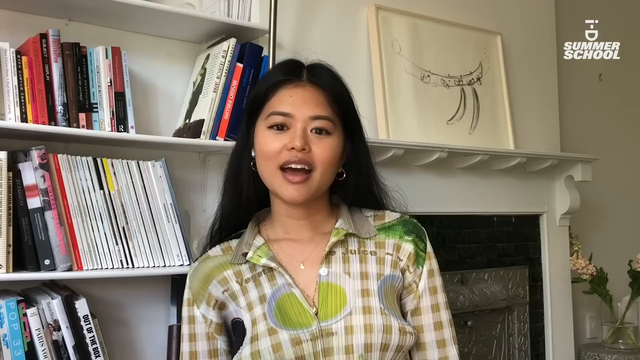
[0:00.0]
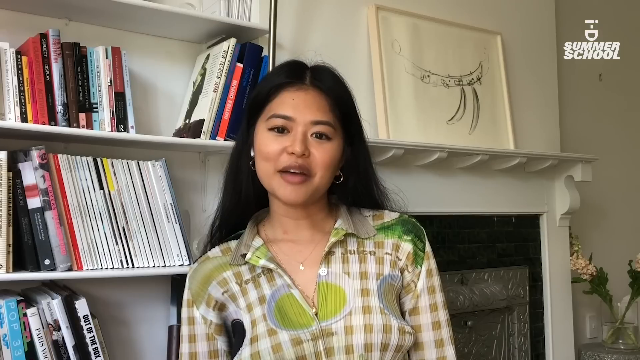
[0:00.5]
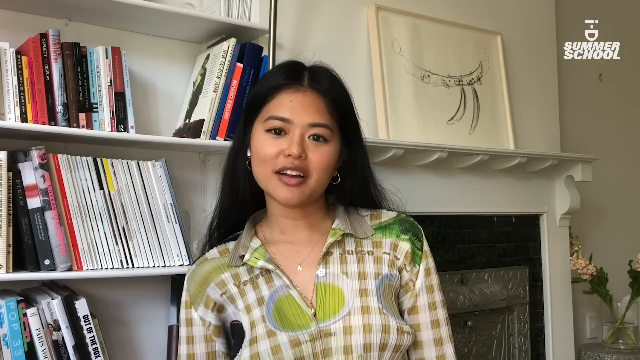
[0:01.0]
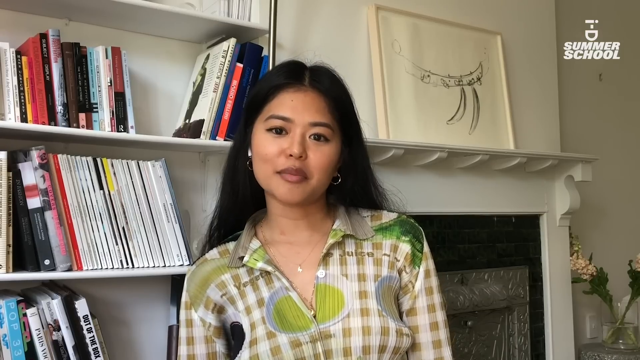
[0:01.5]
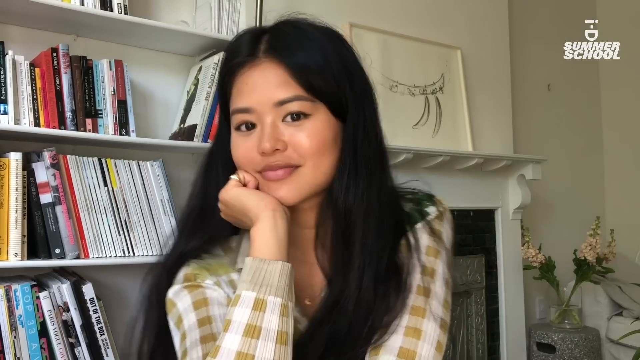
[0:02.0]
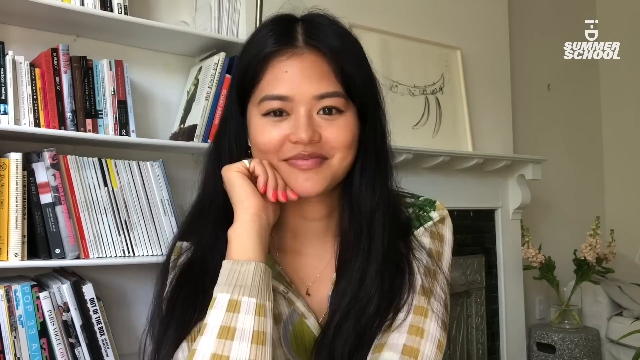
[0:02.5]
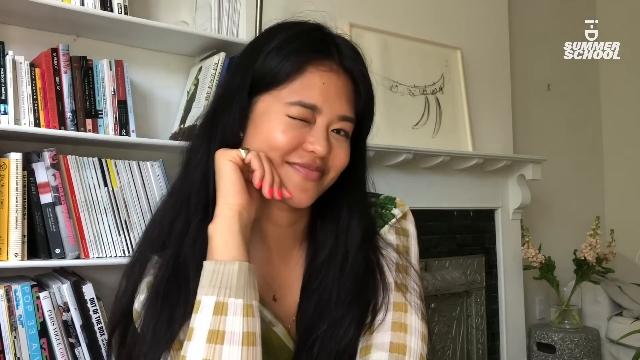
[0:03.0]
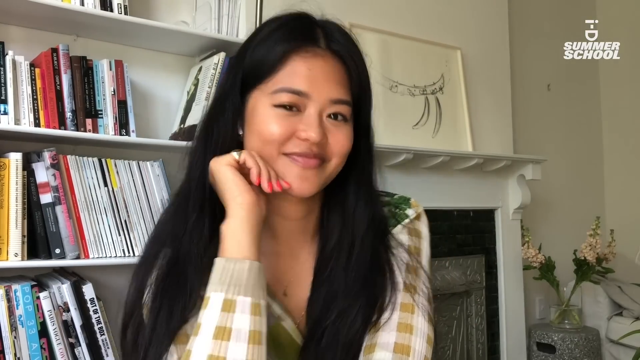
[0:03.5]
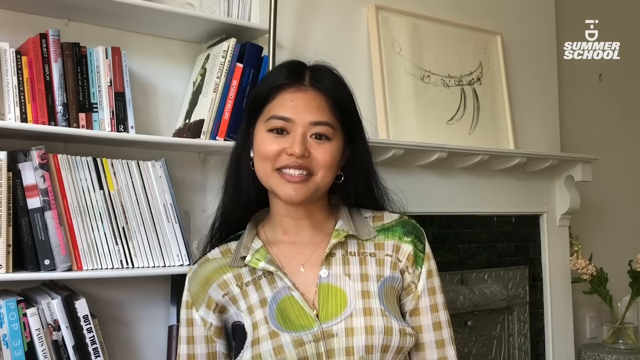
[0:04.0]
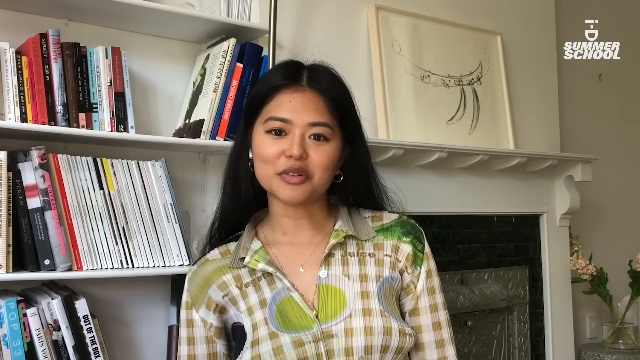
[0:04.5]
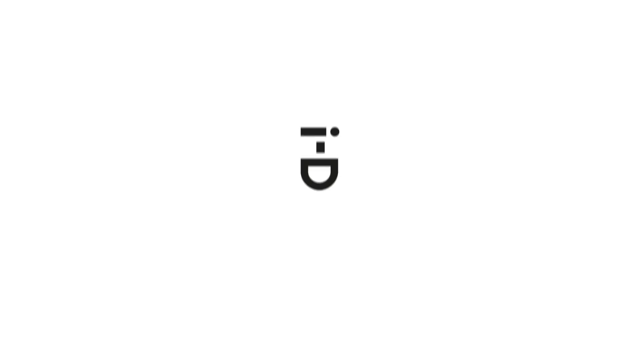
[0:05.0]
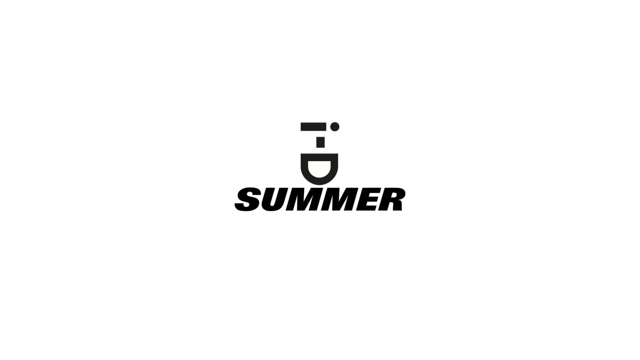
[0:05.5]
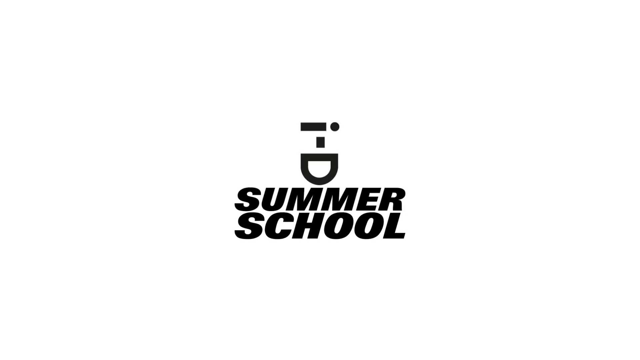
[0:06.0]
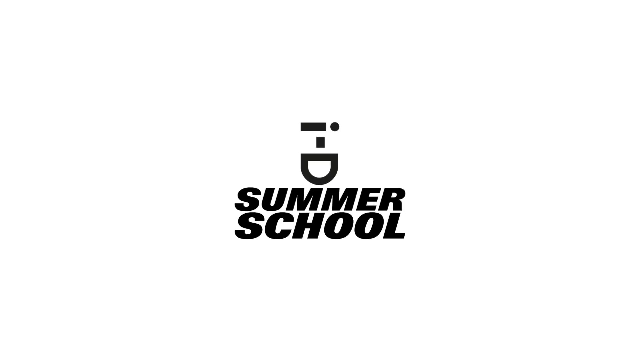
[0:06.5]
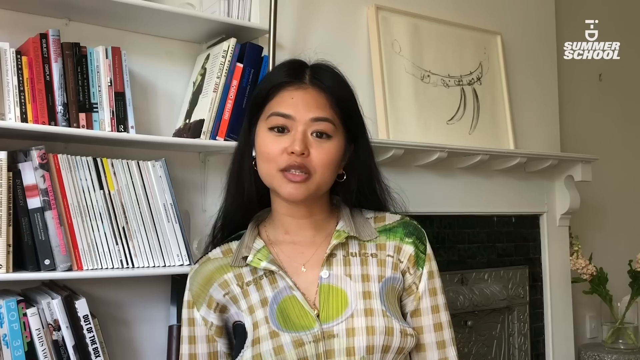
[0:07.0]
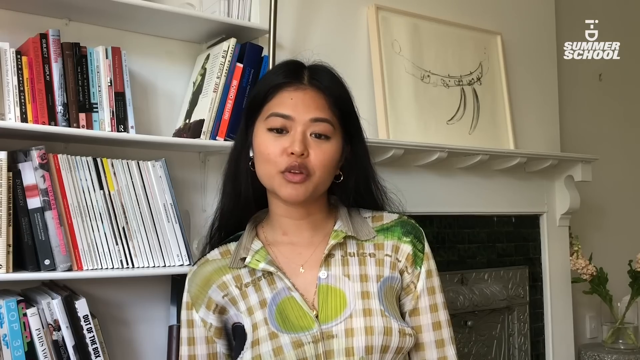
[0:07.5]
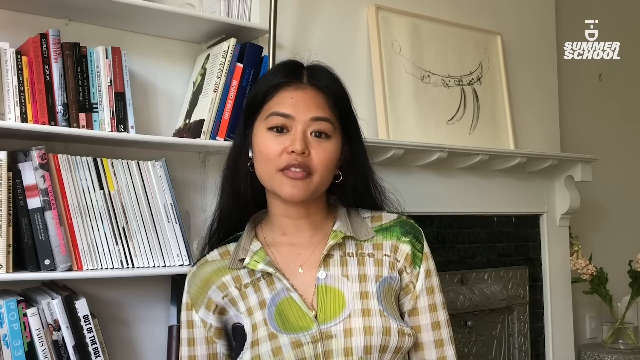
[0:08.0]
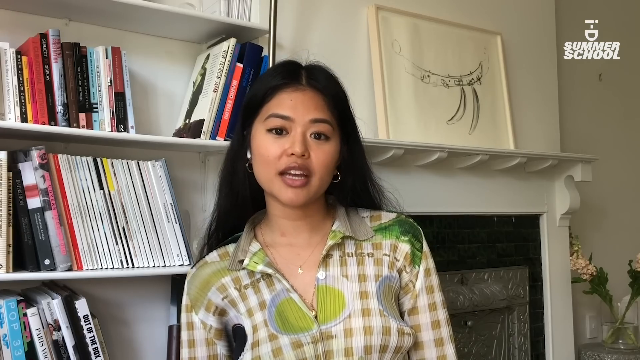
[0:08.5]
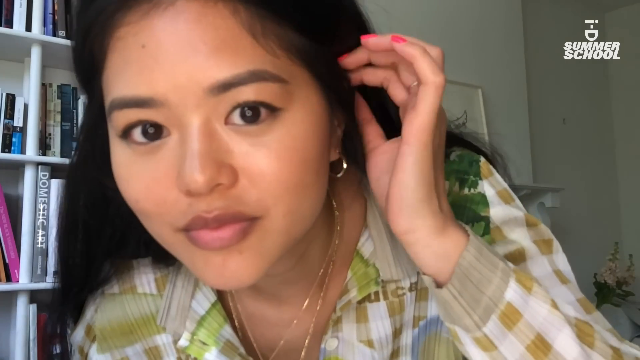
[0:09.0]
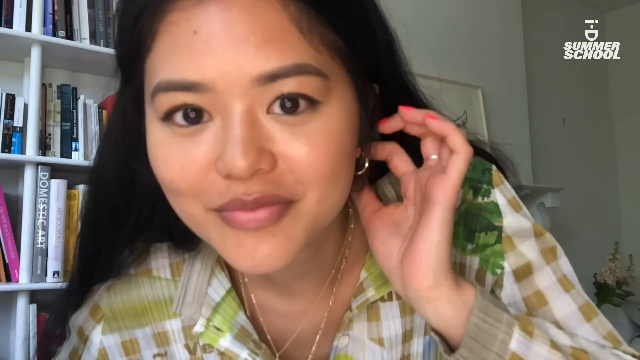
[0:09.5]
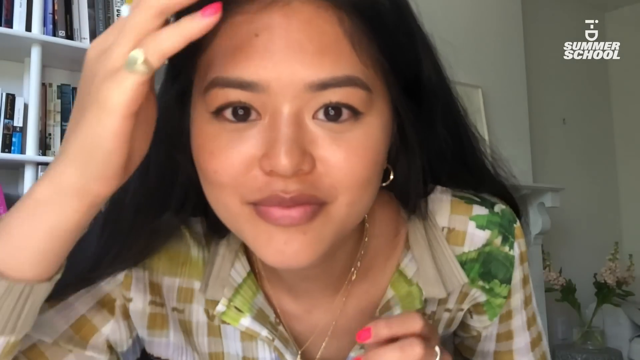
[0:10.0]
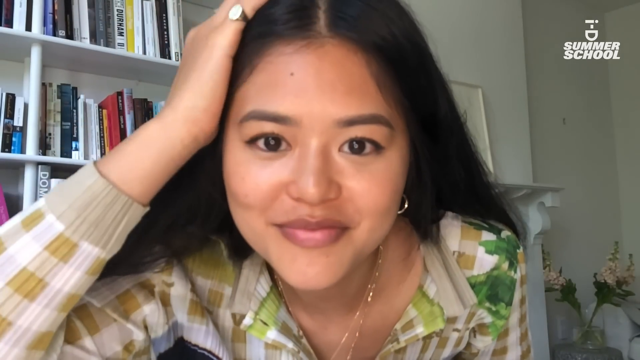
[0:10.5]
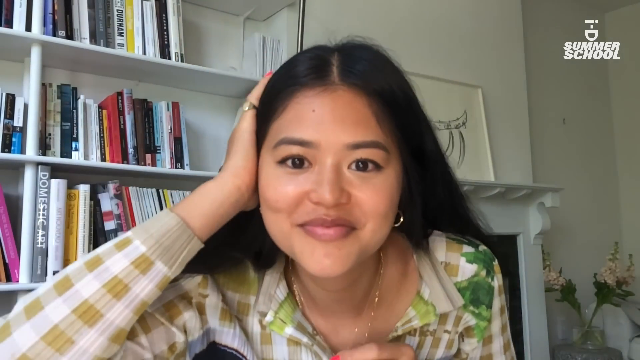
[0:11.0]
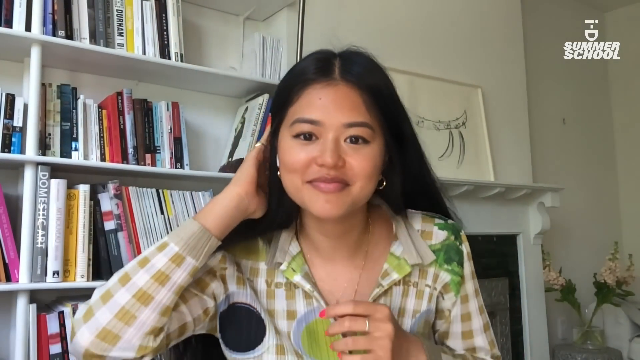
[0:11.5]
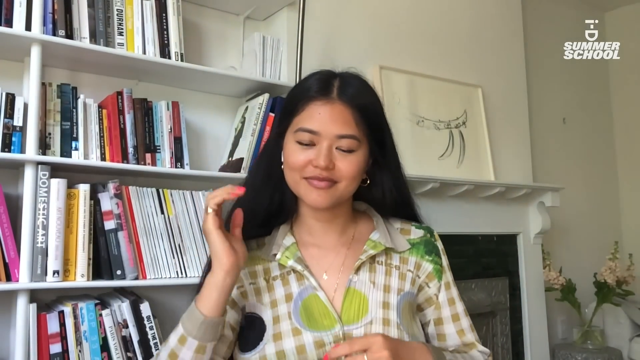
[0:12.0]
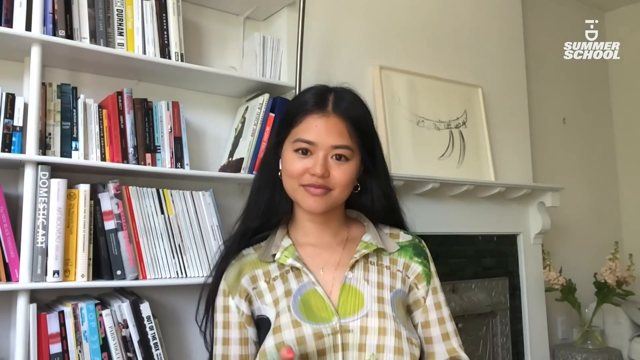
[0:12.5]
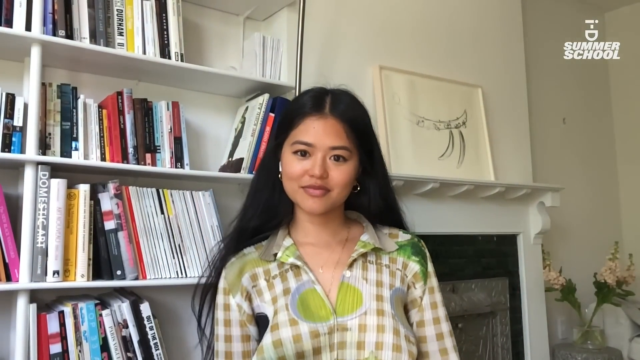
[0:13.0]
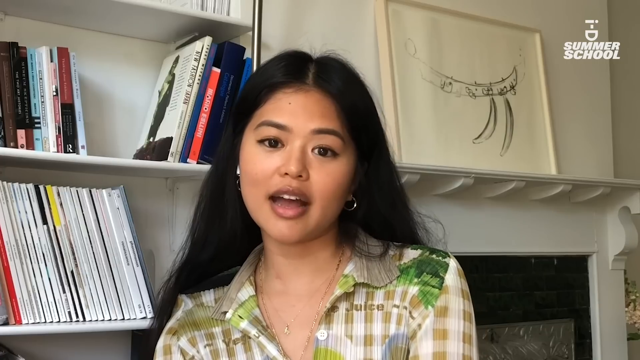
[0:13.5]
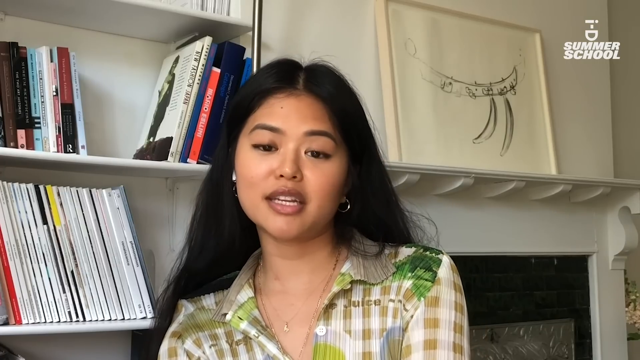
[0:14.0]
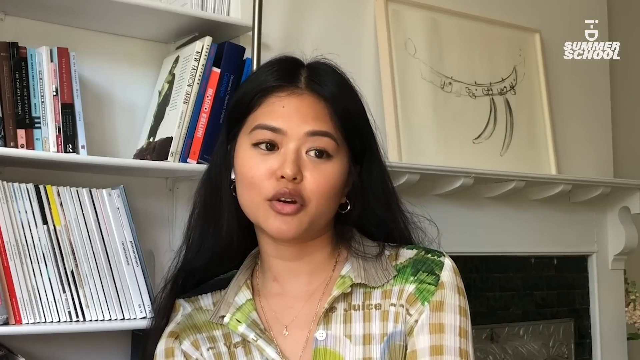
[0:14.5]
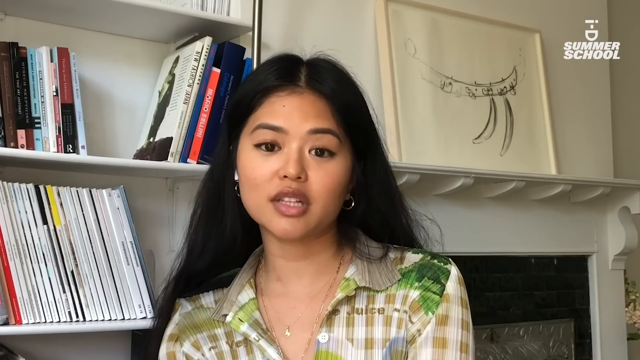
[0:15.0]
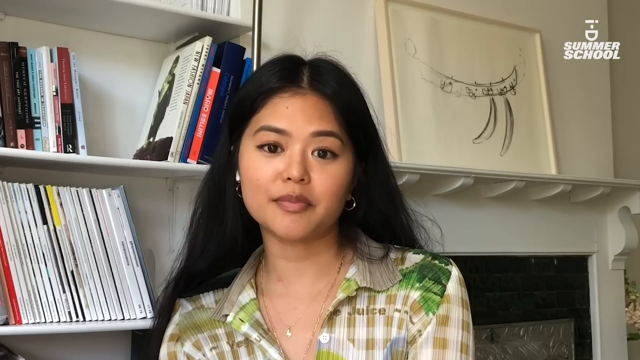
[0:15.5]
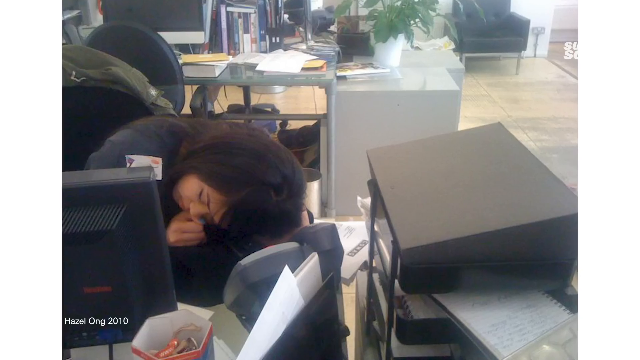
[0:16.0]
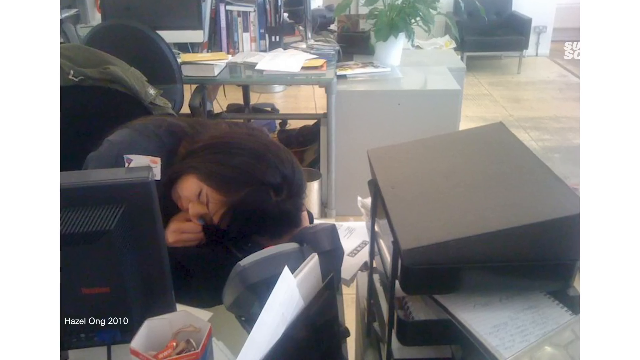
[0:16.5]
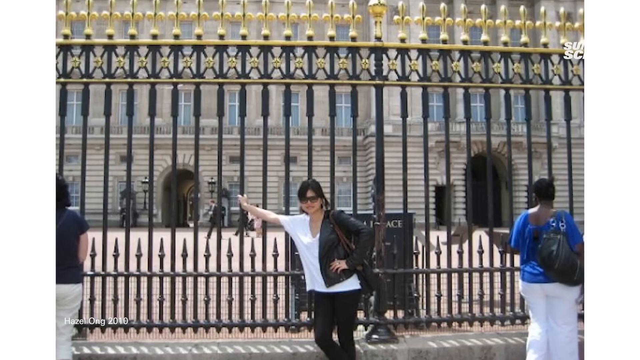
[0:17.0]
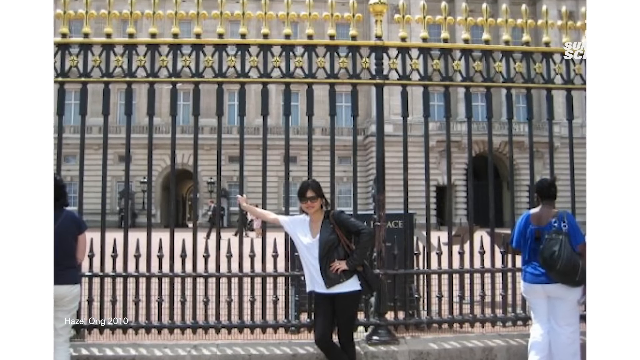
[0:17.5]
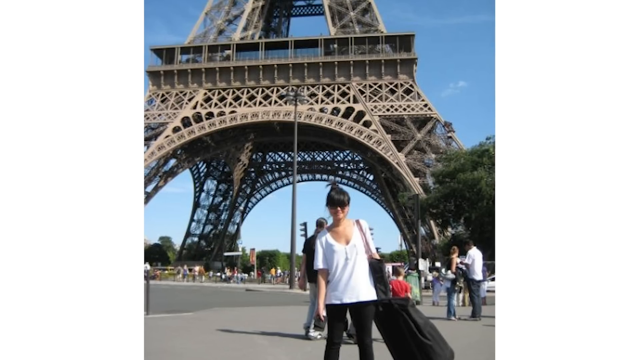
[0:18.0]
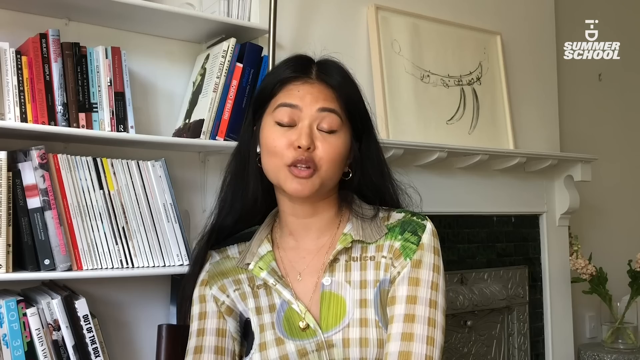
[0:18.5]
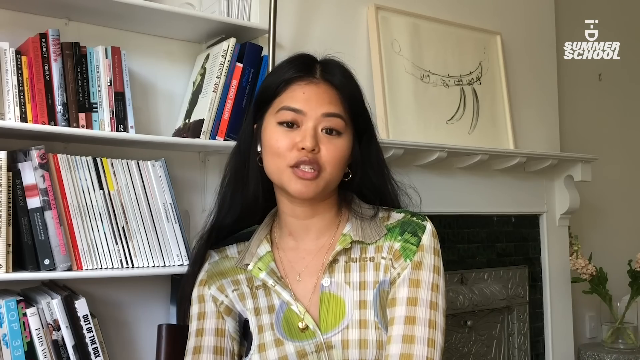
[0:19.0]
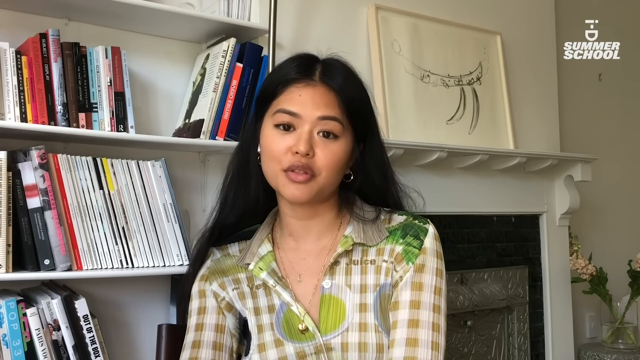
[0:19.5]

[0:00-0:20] An Asian woman with long black hair wears a long-sleeve sweater in tan green and cream white. Behind her, to her left, is a bookshelf with four shelves, each filled with books. To her right is a fireplace with another shelf above it, and on the wall above that shelf hangs a piece of art that is white with a black pencil drawing on it. To the right of the fireplace is a plant in a vase: two green stems, each with a big flower at its tip. She talks into the camera, then the screen turns solid white and the words "summer school" pop up in black. She then puts her head up in front of the camera for a close-up.